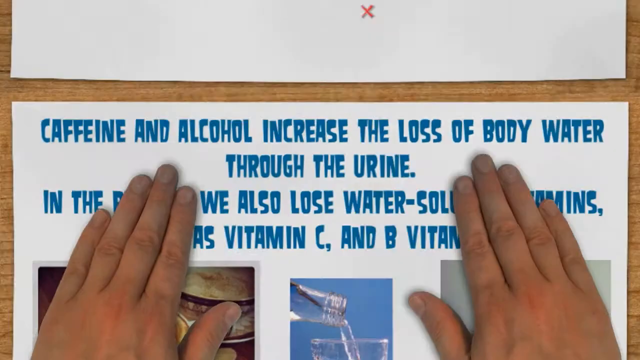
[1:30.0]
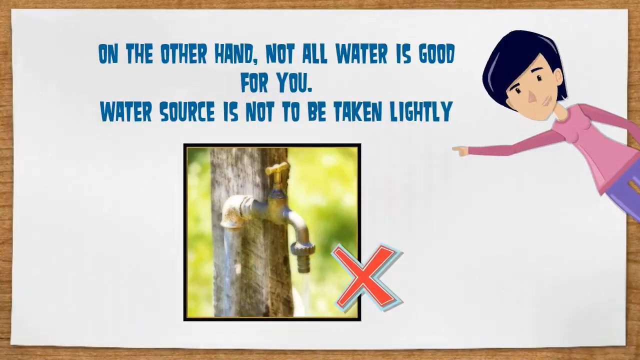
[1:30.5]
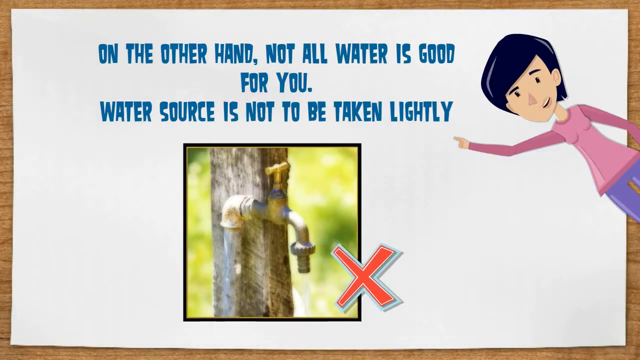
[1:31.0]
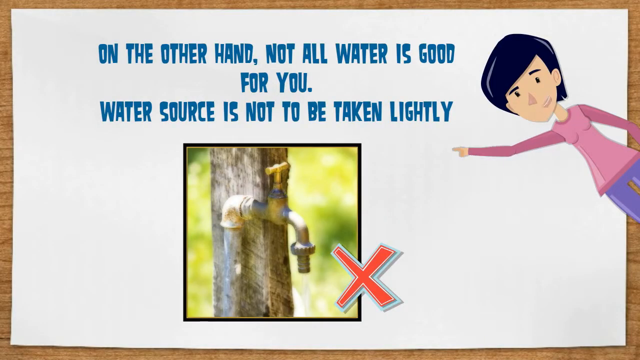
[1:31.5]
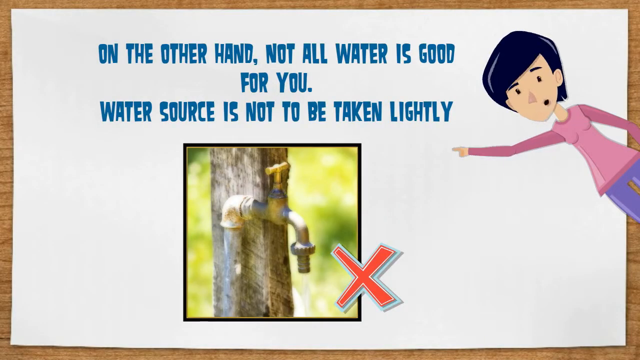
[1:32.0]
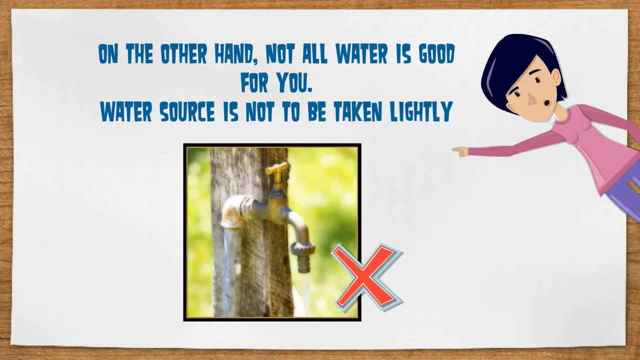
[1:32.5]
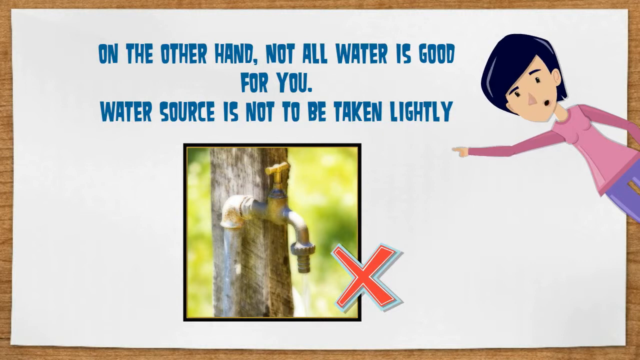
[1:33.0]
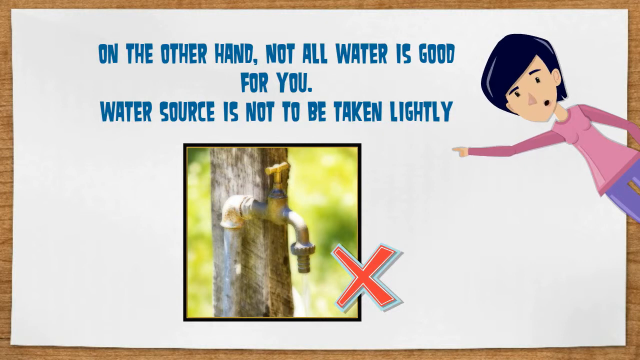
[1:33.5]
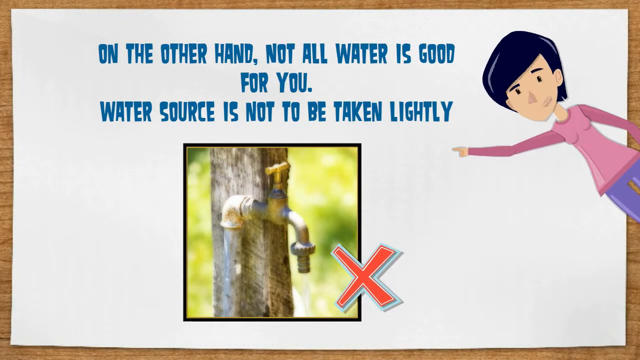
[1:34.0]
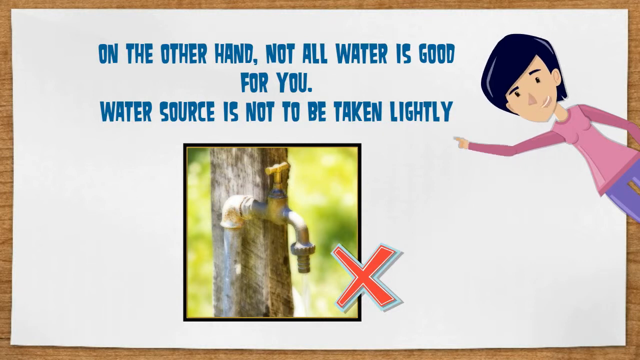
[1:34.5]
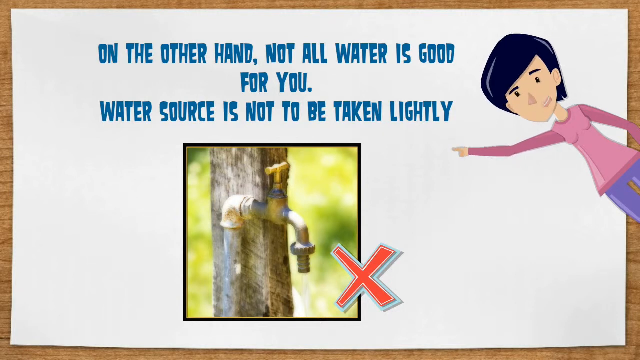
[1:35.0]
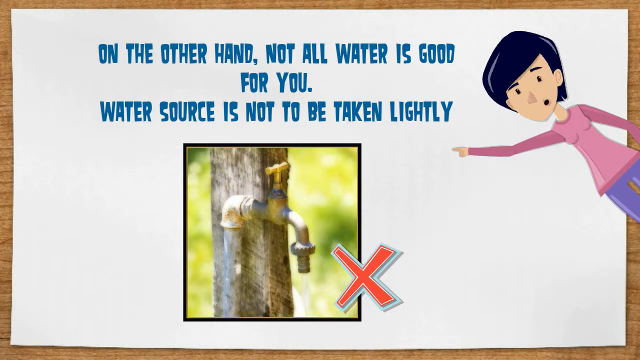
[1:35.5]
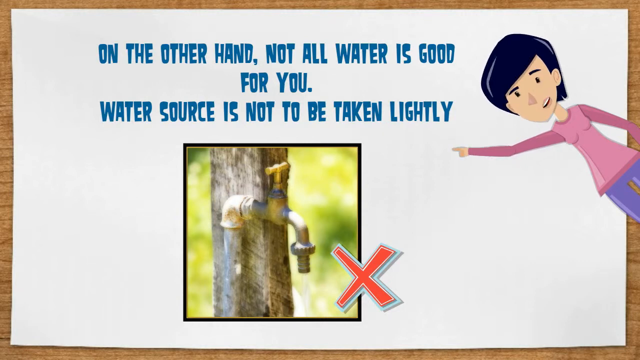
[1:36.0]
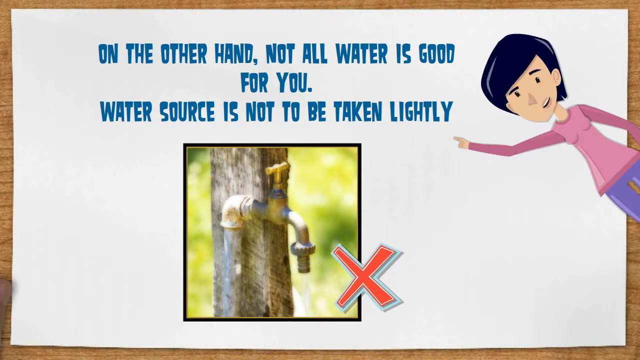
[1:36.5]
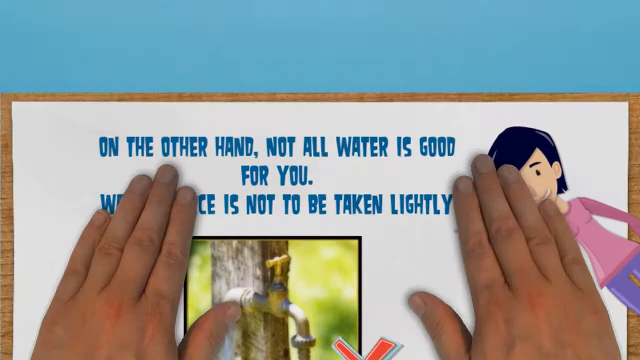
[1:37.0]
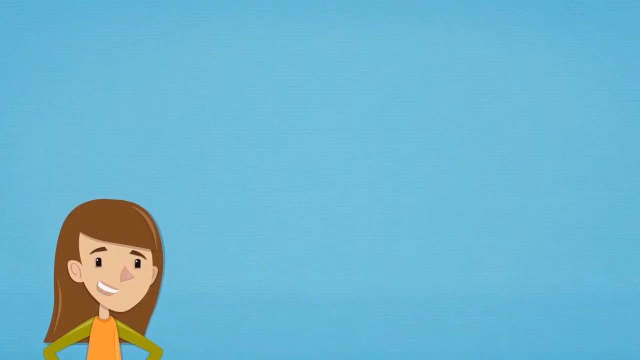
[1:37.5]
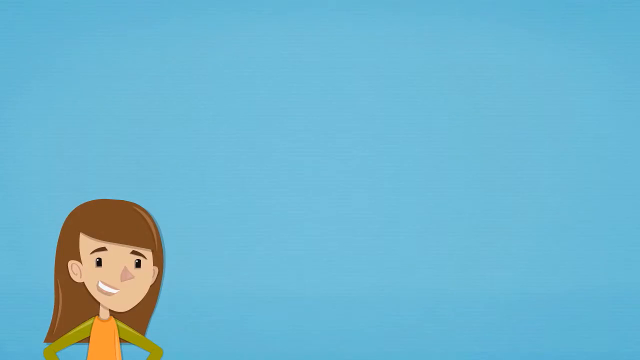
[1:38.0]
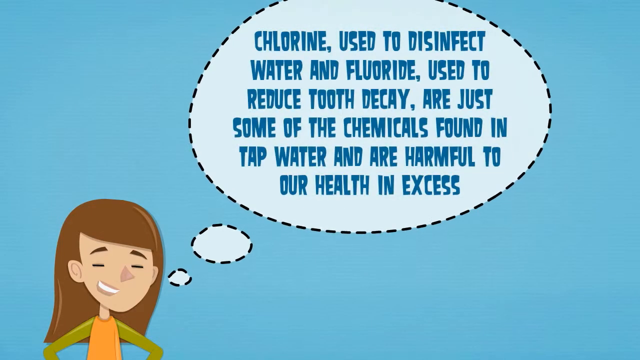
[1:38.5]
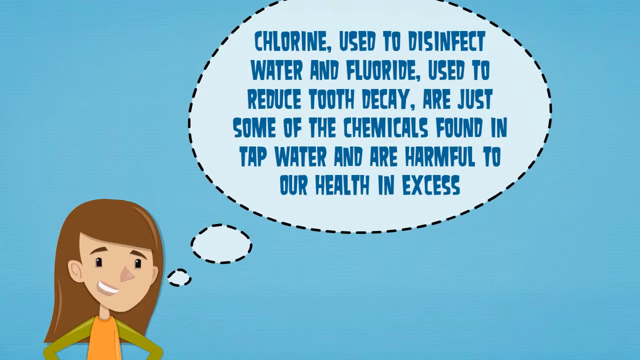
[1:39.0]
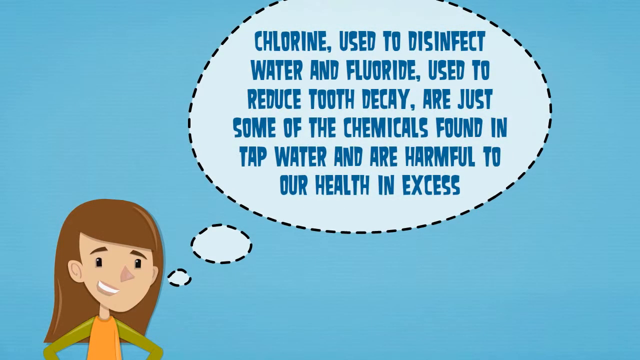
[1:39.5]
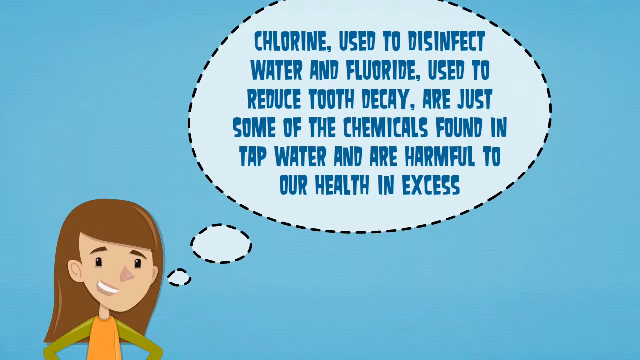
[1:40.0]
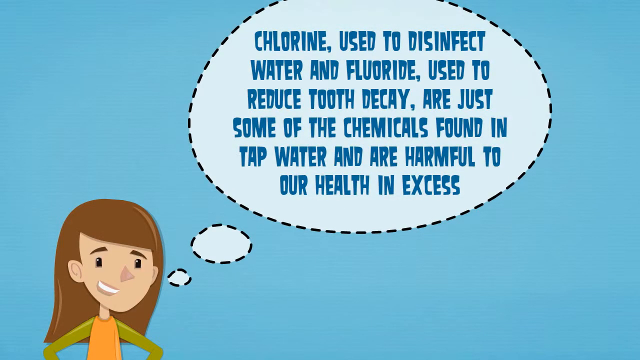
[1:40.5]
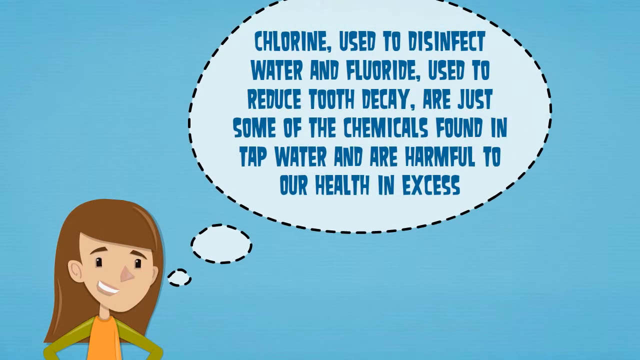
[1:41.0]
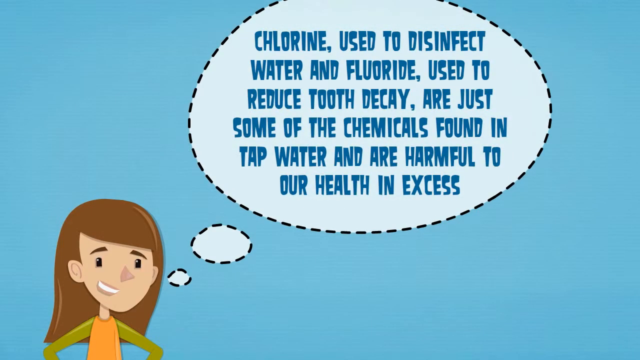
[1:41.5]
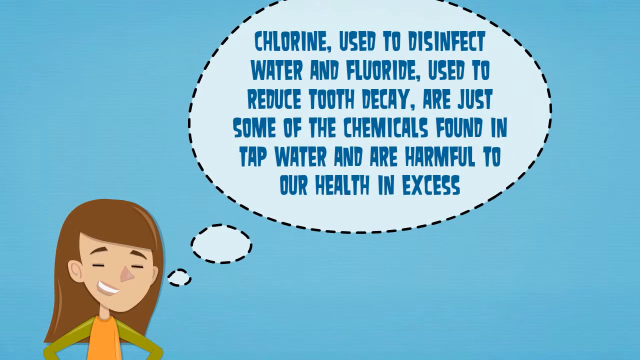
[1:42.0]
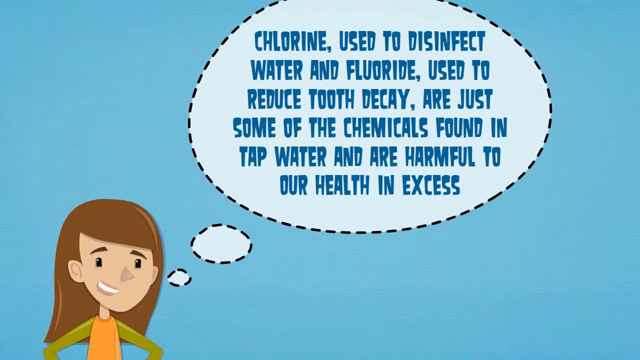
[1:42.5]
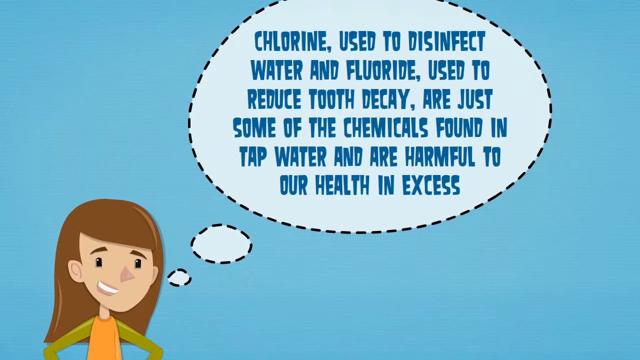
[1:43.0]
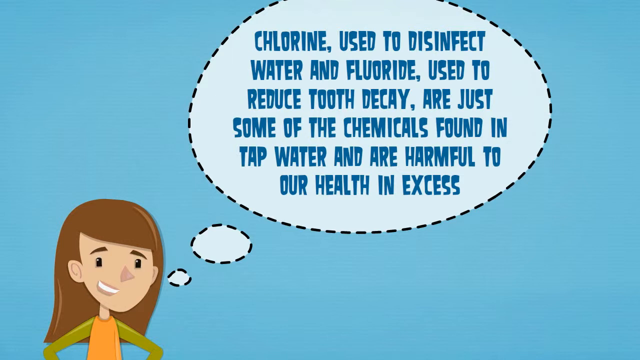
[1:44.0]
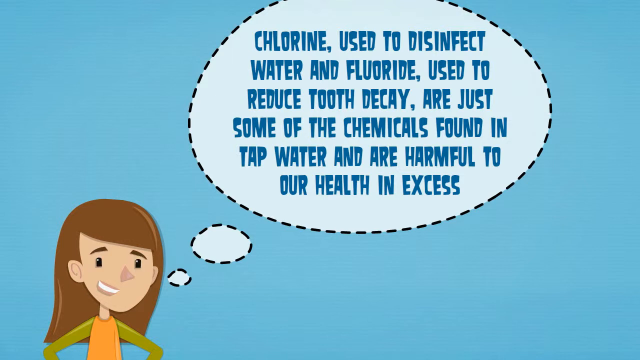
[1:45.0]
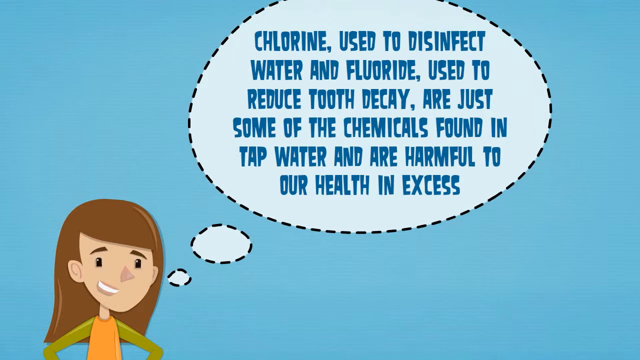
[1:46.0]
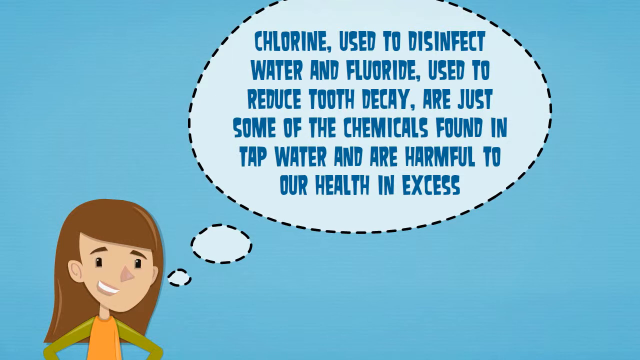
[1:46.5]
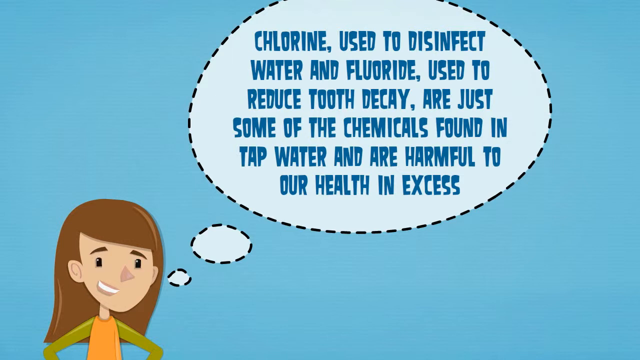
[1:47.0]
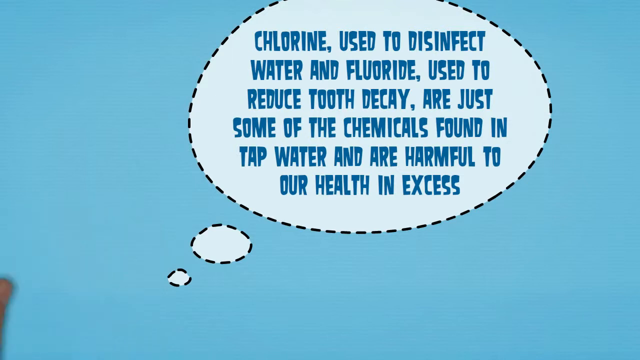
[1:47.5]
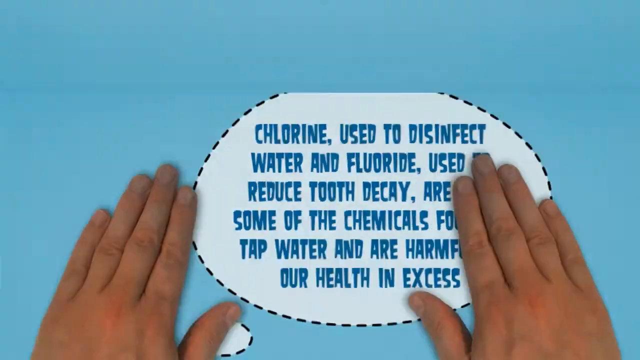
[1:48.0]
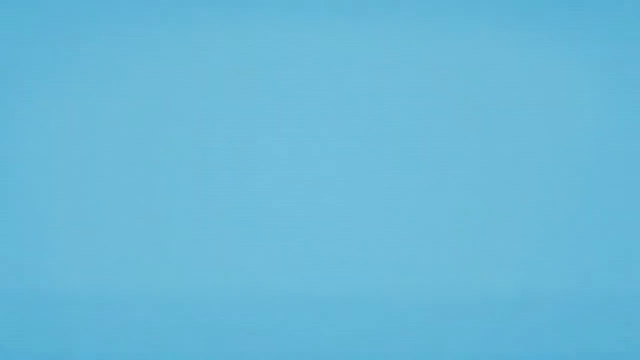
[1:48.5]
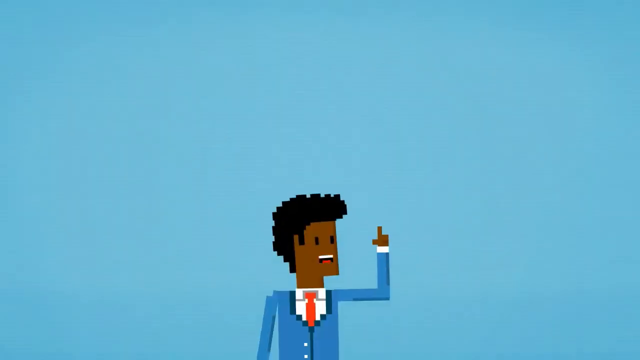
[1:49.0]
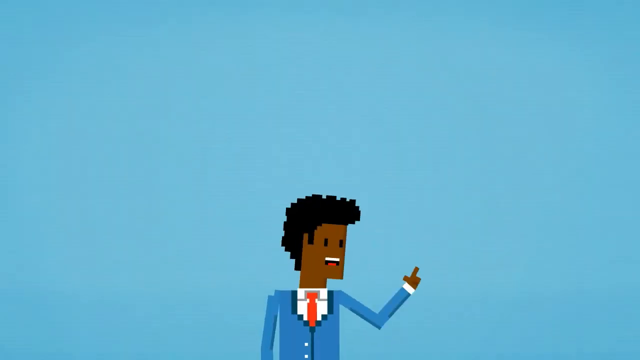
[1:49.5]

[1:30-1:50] The sleeved hands appear from the bottom of the image, are placed in the center and pull the slide down. It is replaced by another piece of paper with an image of a tap in the center; the tap is screwed to some wood and water is pouring out against the wood. The cartoon woman, in a pink T-shirt and purple trousers, has returned and points her right arm toward the fact and the tap. Above the tap, the writing reads "on the other hand, not all water is good for you. Water source is not to be taken lightly." A red cross is next to the tap image. The woman moves her arm, head and lips as if speaking. The two hands appear on the white text and pull it down, and it is replaced by a bright sky blue screen. A cartoon girl, shown from the shoulders up, appears on the left, and a thought bubble appears from her head, taking up most of the screen in the center. The text in the bubble reads "chlorine used to disinfect water and fluoride used to reduce tooth decay are just some of the chemicals found in tap water and are harmful to our health in excess." The girl blinks as she stares forward at the viewer while the text remains. She then moves off to the left of the image. The two hands appear and pull the slide down, and it is replaced by another blank blue slide.